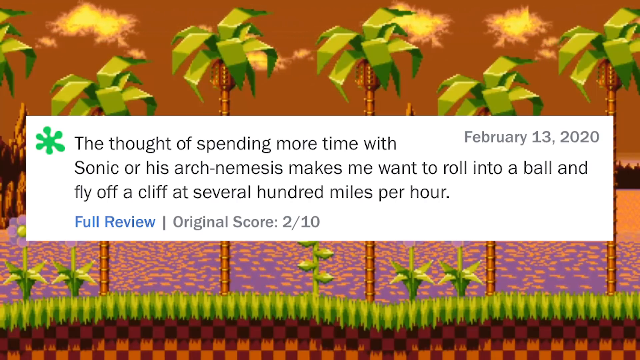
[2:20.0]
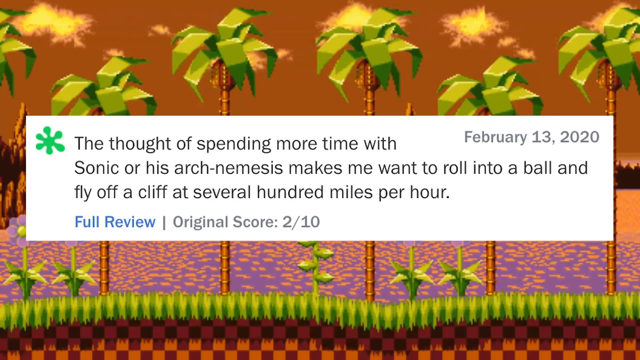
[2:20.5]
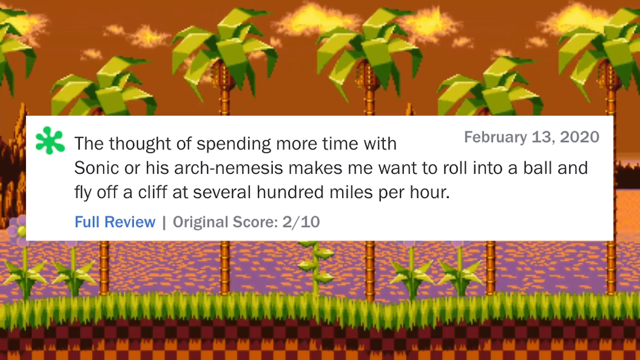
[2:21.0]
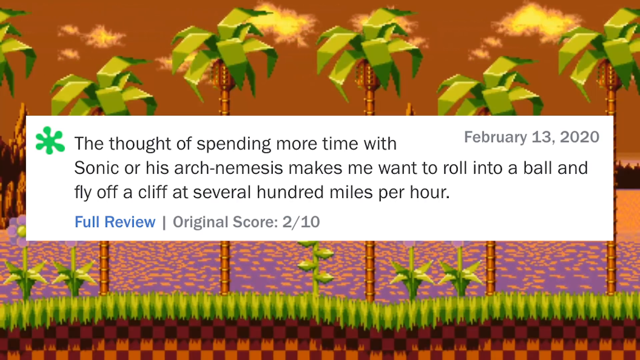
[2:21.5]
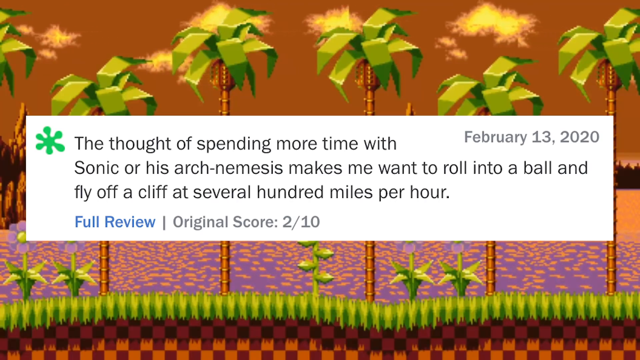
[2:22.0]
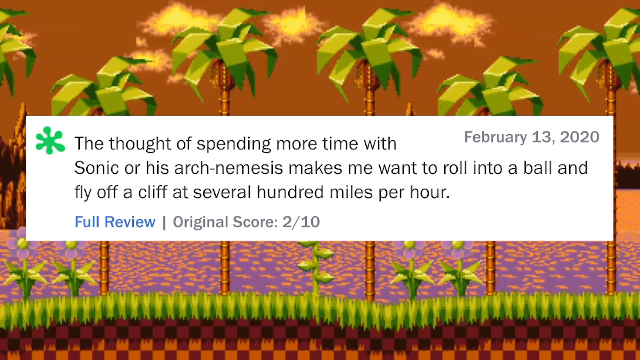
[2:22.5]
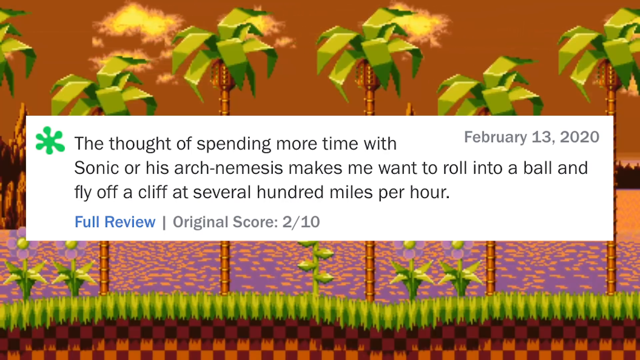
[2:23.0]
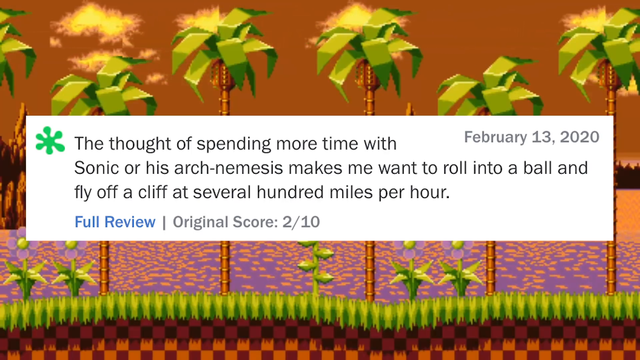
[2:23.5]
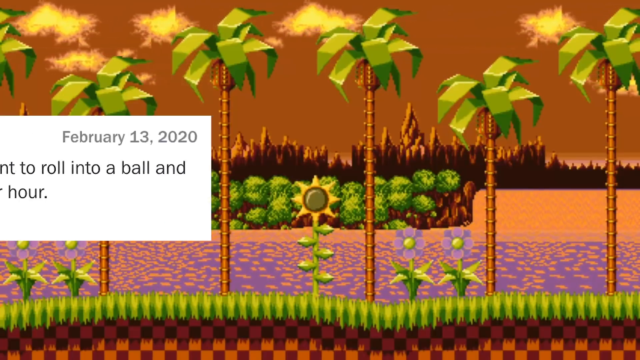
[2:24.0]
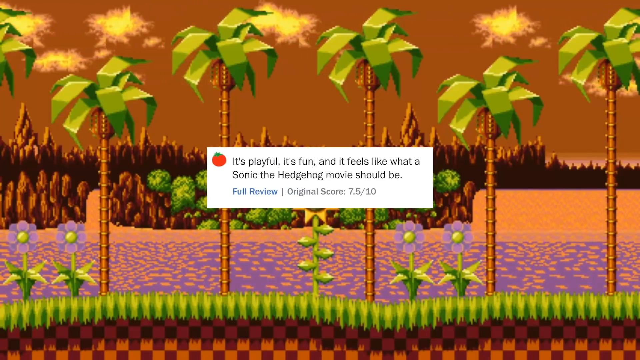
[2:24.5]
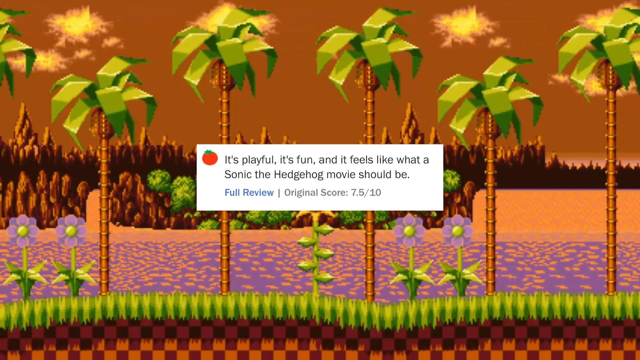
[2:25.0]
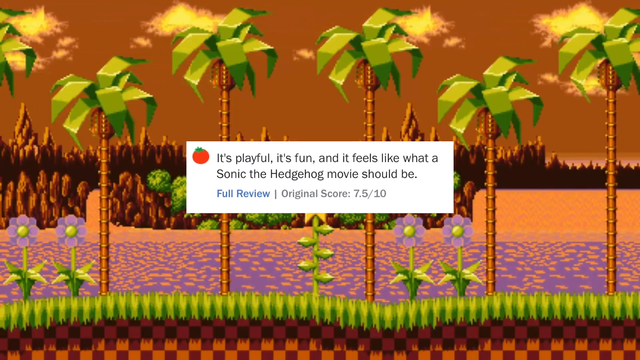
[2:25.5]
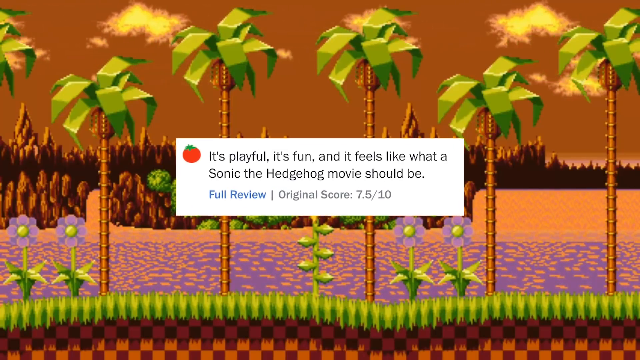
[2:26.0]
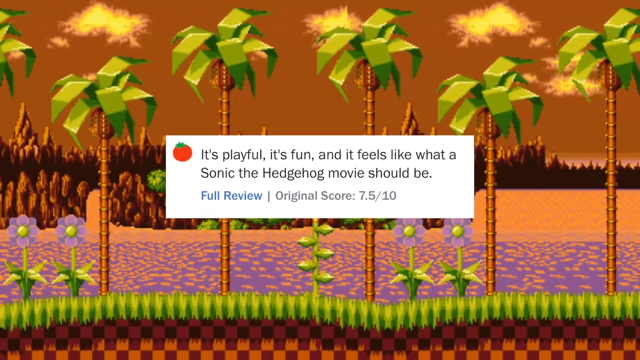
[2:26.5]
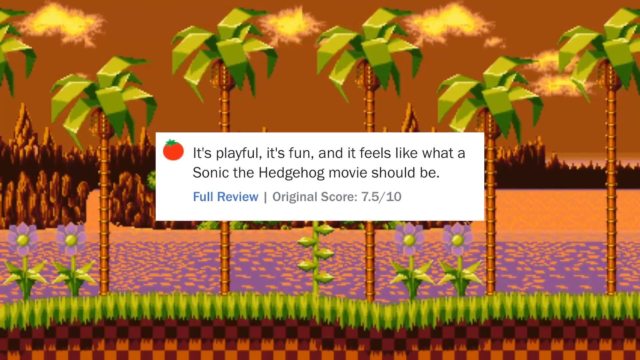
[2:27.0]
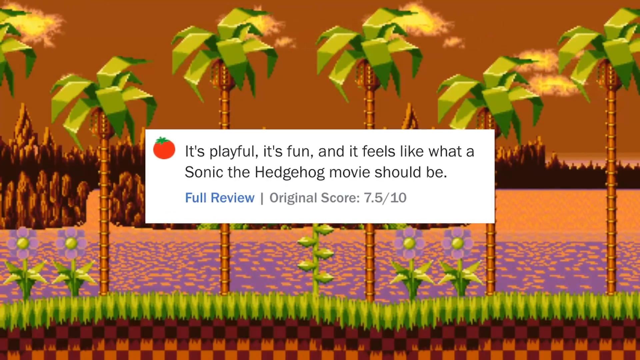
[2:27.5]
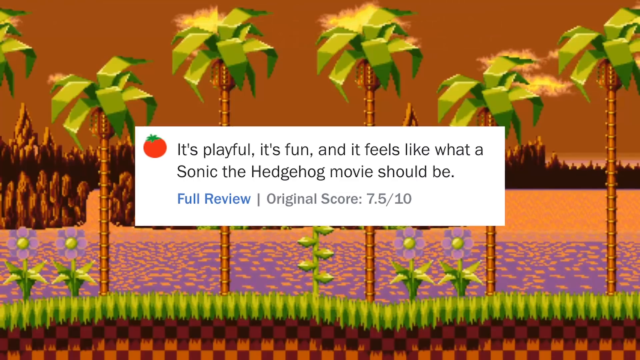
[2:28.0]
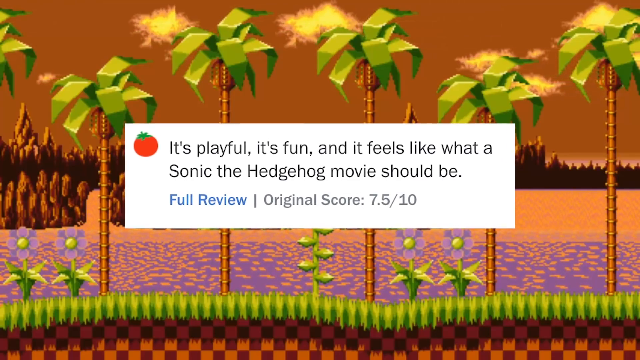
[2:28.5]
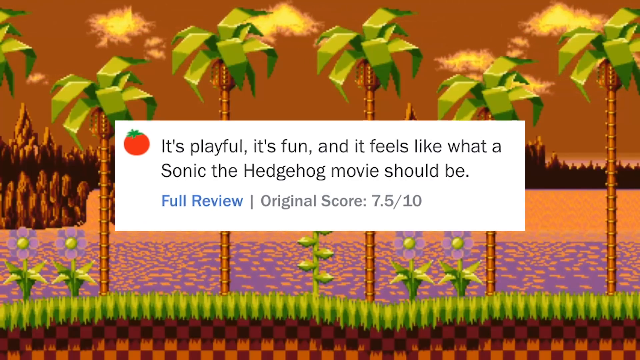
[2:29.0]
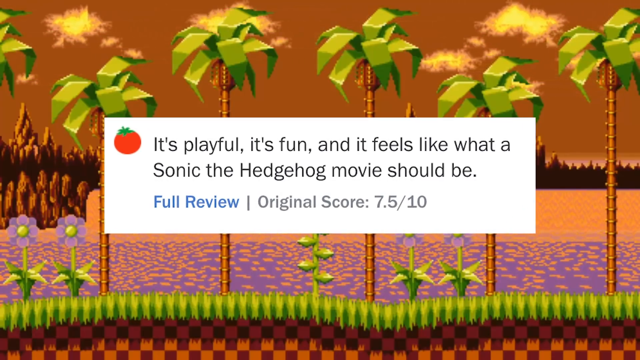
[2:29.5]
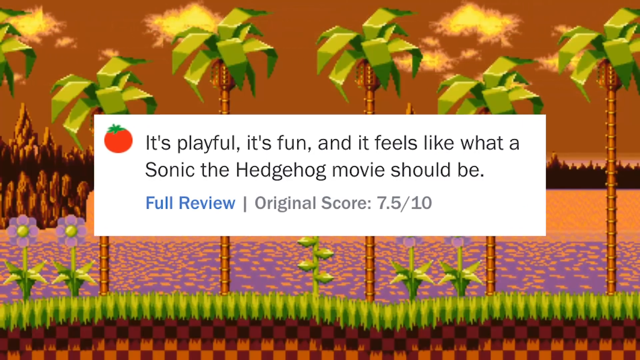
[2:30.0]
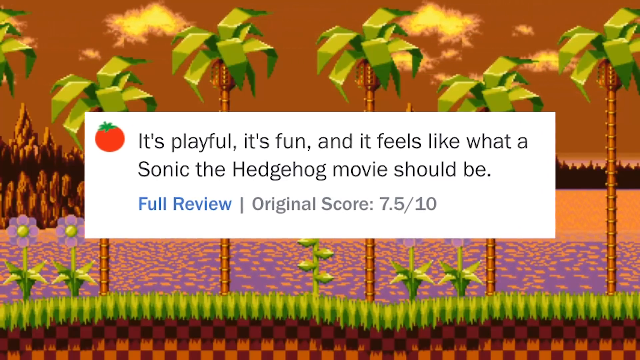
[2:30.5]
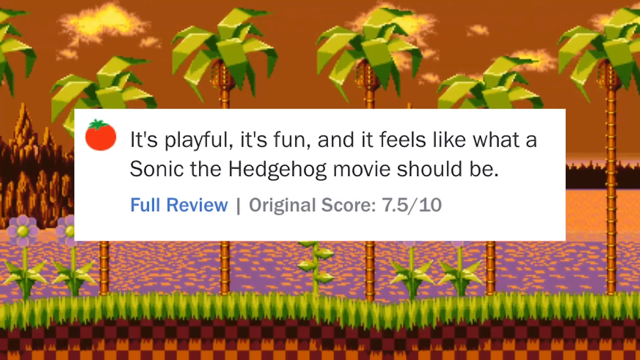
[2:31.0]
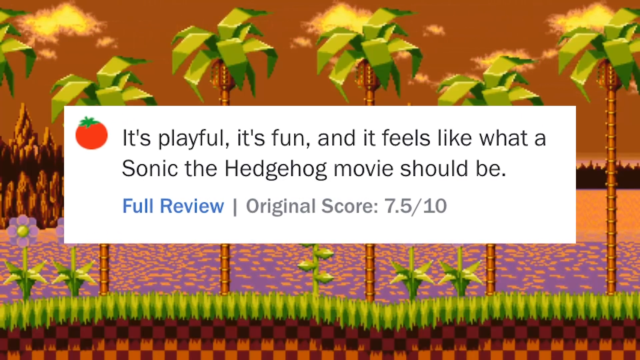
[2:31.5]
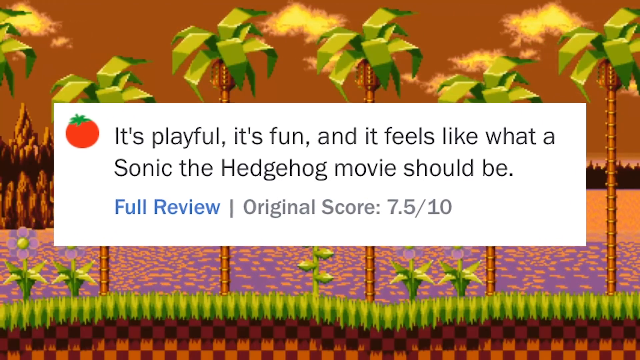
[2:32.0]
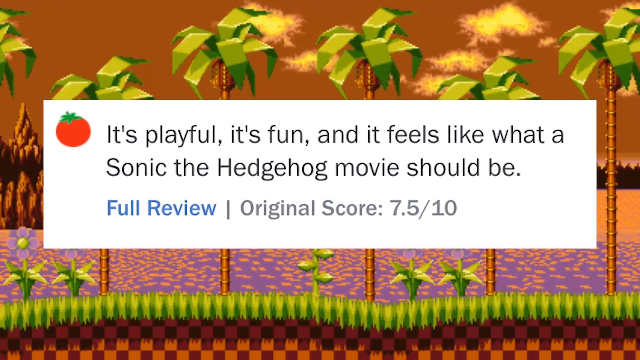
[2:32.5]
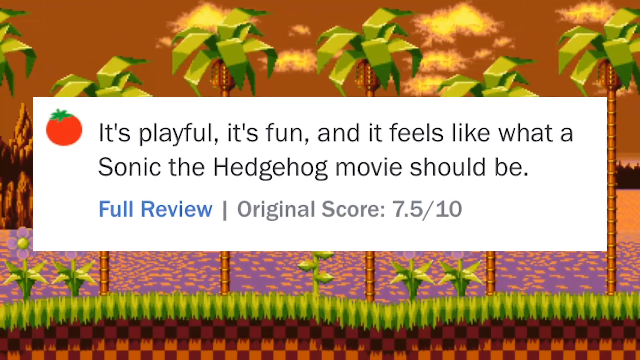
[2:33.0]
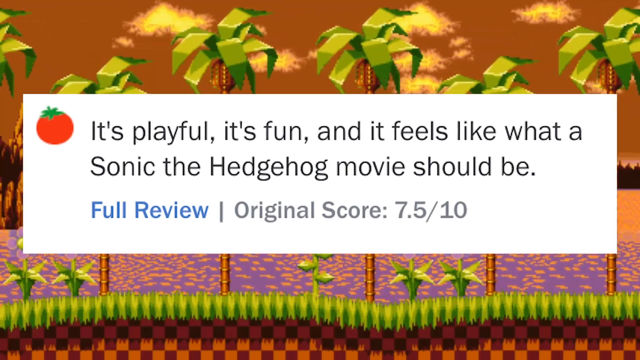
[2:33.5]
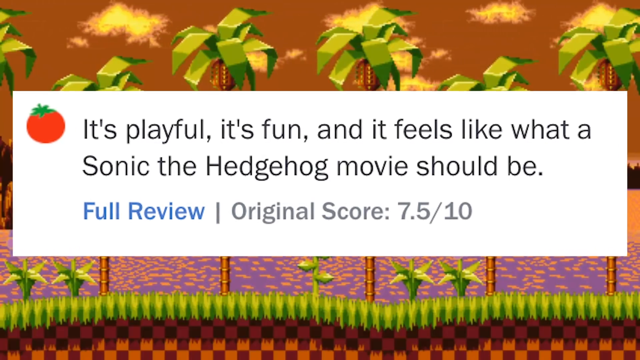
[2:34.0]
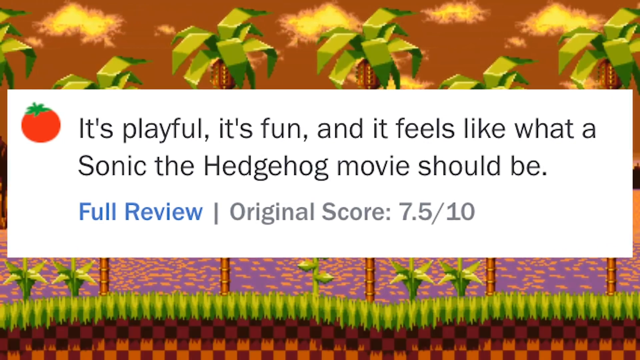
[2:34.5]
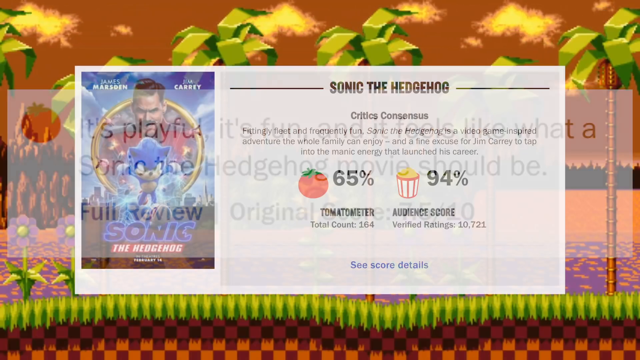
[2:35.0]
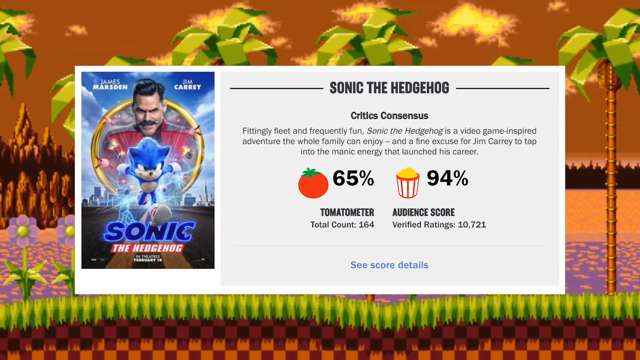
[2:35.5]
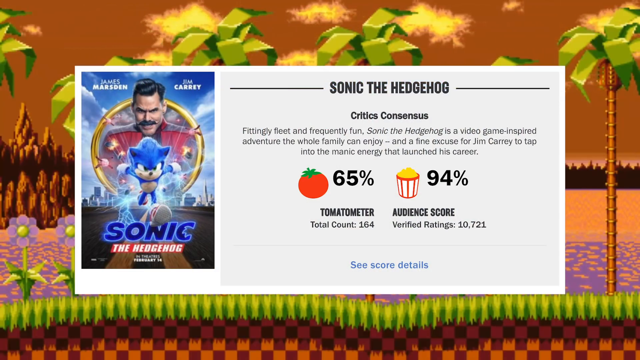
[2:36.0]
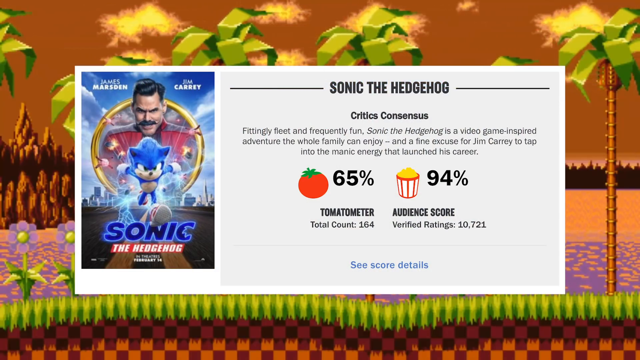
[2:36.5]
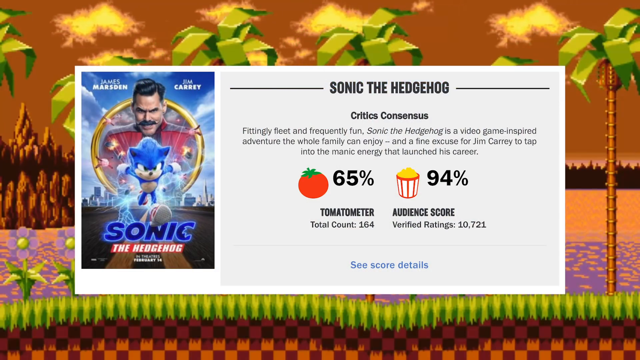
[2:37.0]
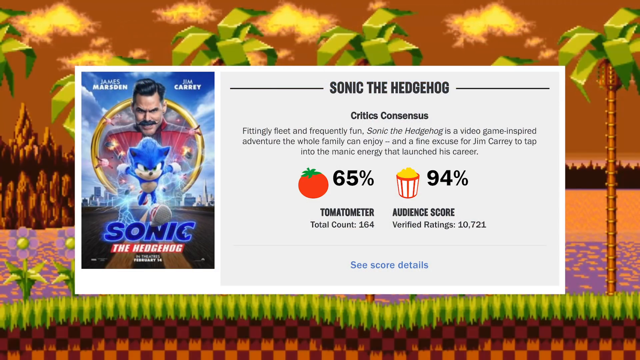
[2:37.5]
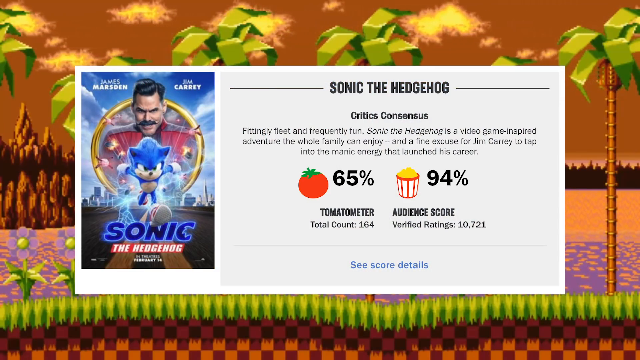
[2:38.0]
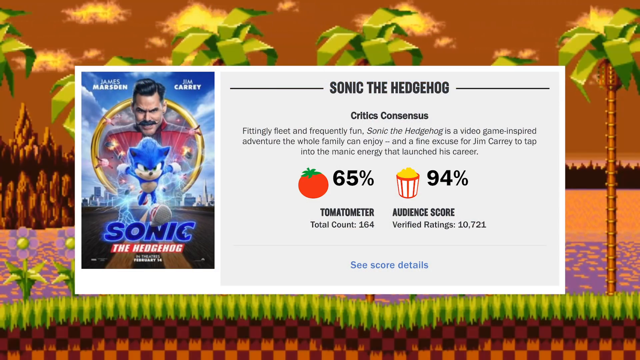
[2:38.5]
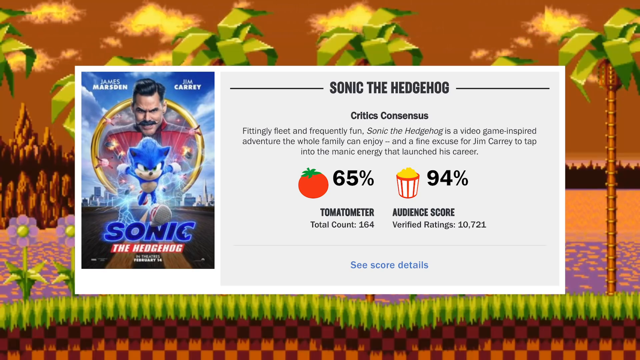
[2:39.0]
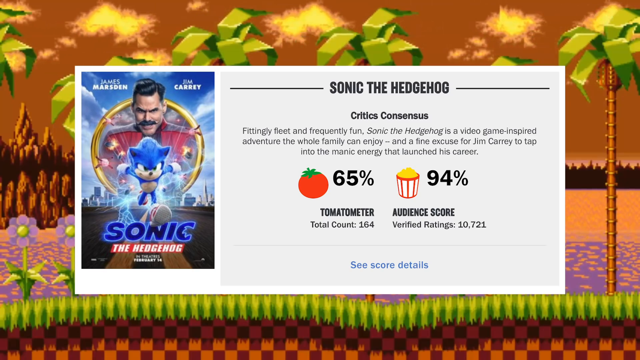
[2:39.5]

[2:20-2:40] The first positive review appears, stating "it's playful, it's fun, and it feels like what a Sonic the Hedgehog movie should be," with a score of 7.5 out of 10. The video zooms in on this review. Next comes the critics consensus, which states: "fittingly fleet and frequently fun. Sonic the Hedgehog is a video game inspired adventure the whole family can enjoy and a fine excuse for Jim Carrey to tap into the manic energy that launched his career." Rotten Tomatoes gives it a Tomatometer score of 65%, and the Audience score is 94% from 10,721 Verified Ratings.